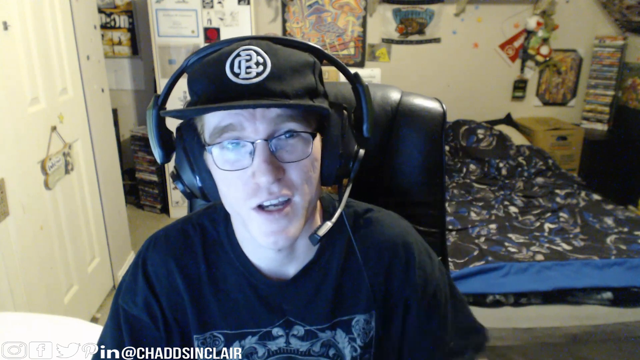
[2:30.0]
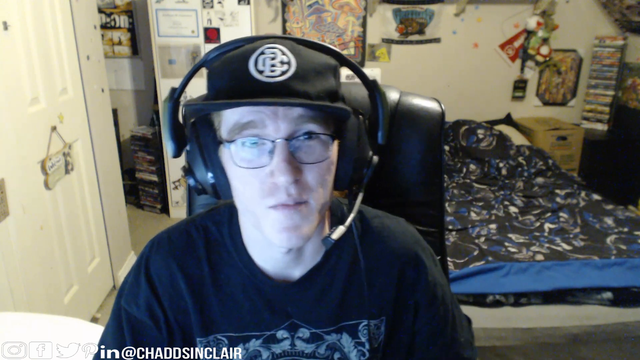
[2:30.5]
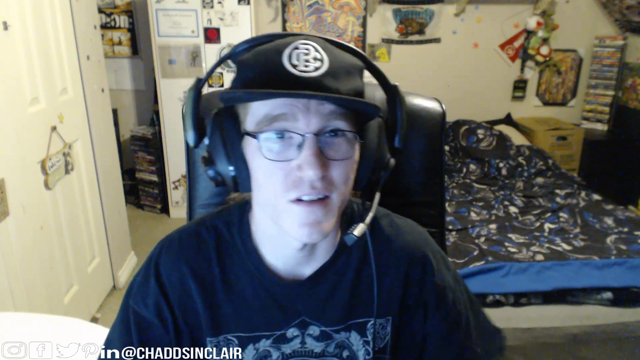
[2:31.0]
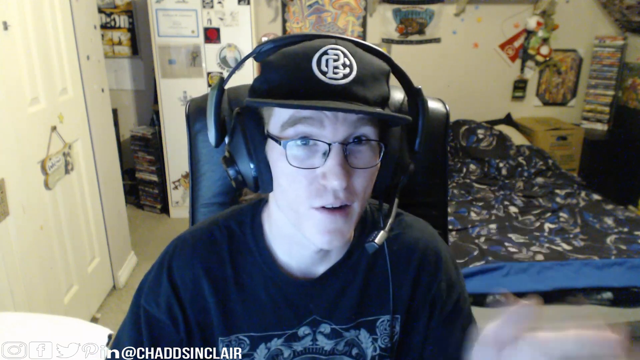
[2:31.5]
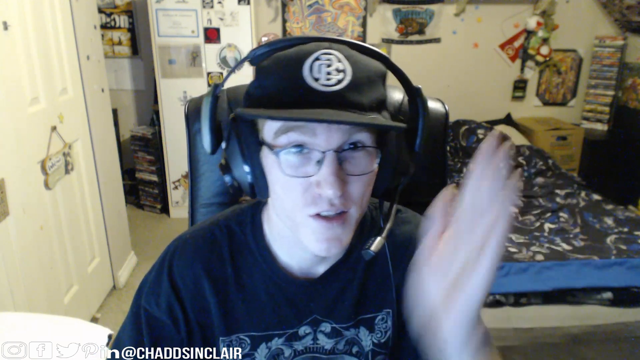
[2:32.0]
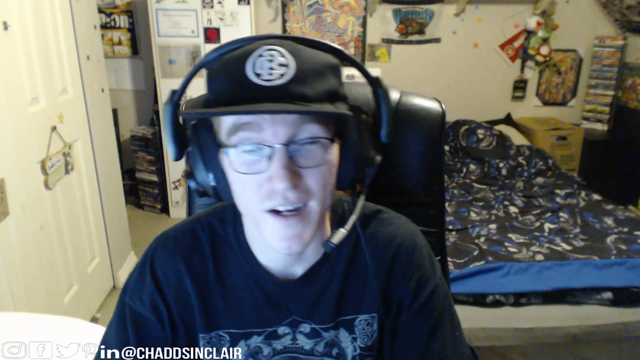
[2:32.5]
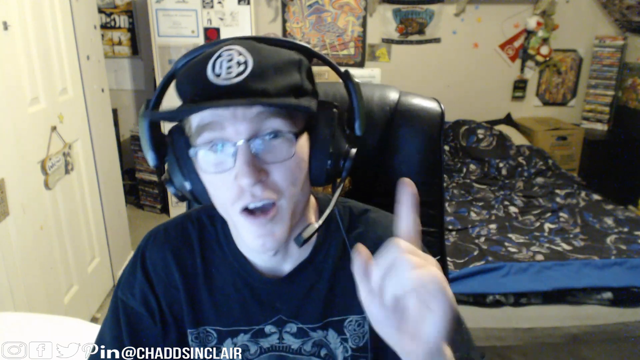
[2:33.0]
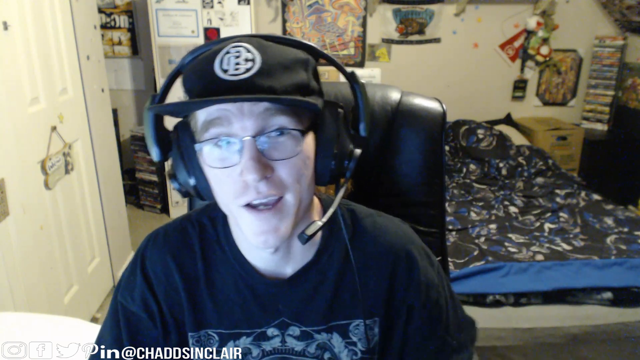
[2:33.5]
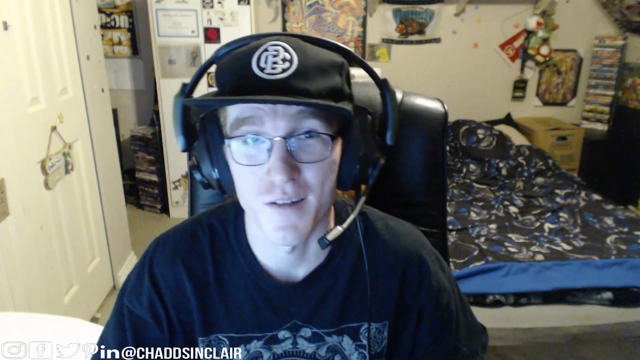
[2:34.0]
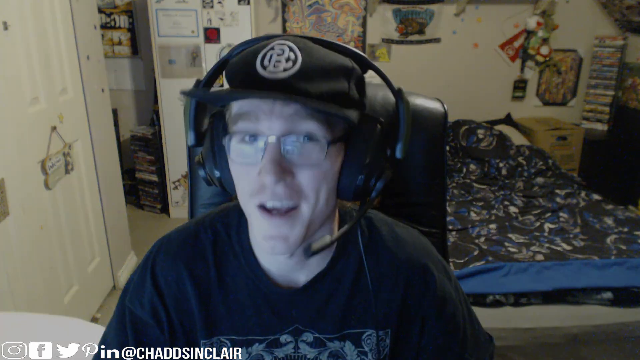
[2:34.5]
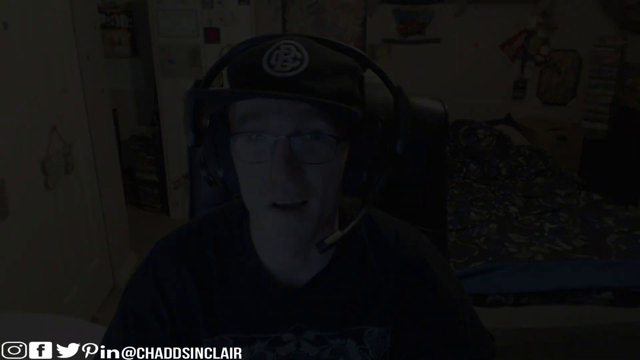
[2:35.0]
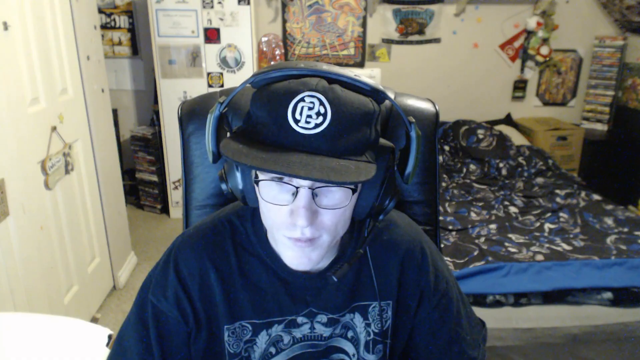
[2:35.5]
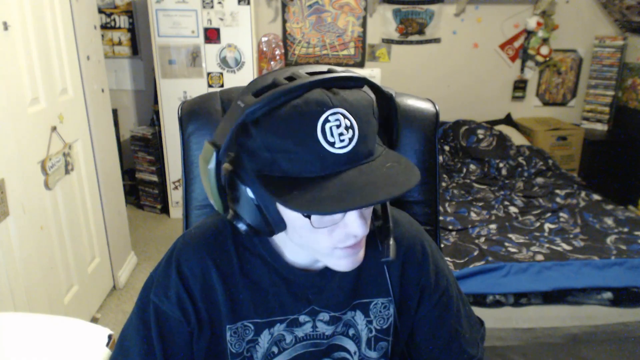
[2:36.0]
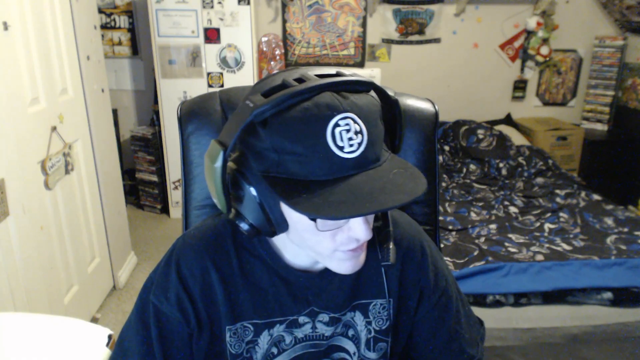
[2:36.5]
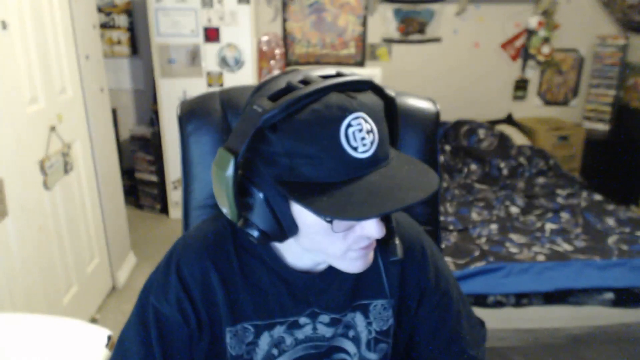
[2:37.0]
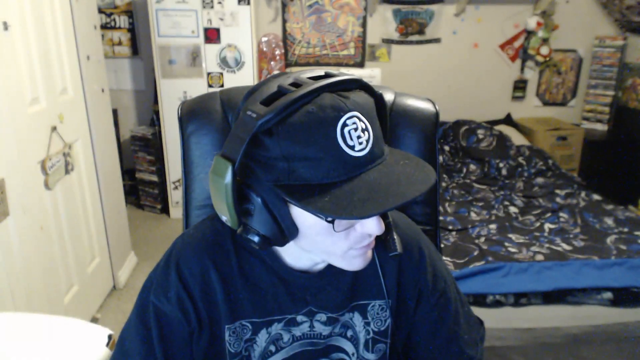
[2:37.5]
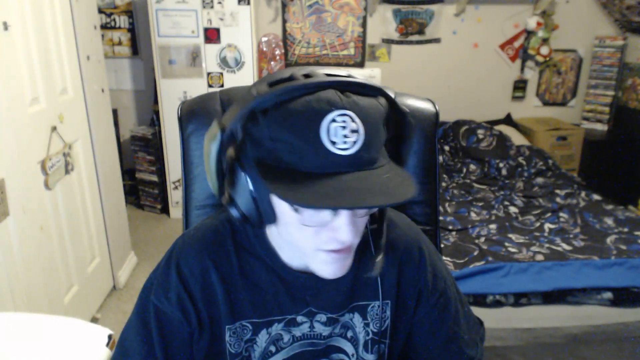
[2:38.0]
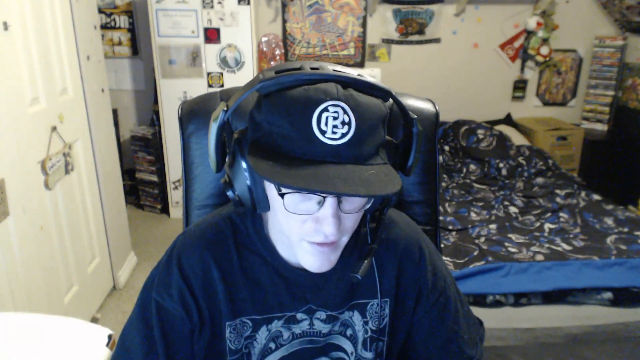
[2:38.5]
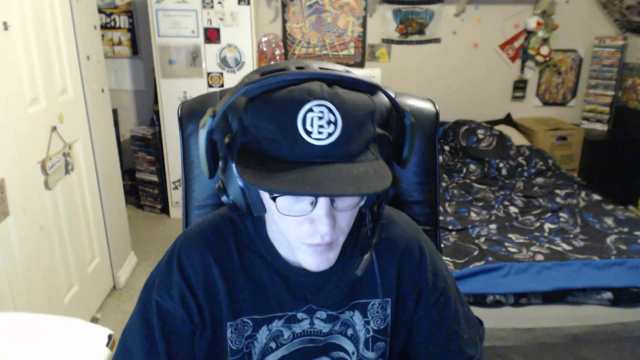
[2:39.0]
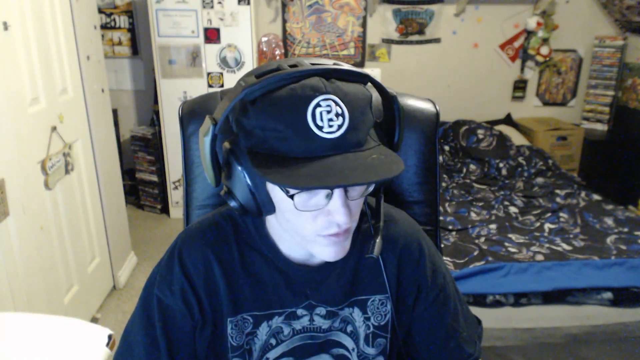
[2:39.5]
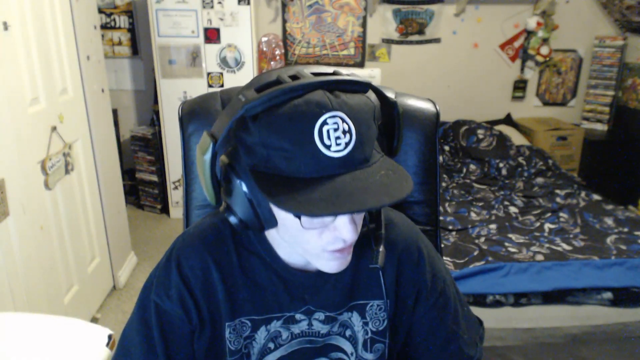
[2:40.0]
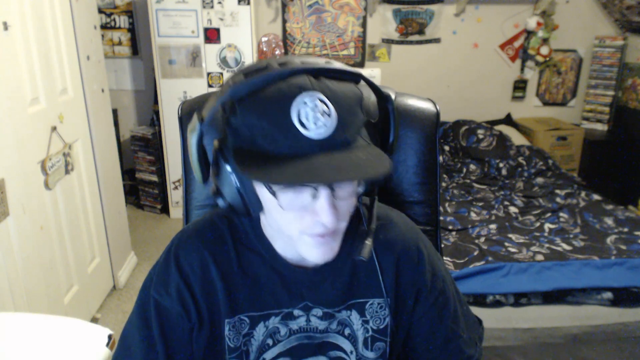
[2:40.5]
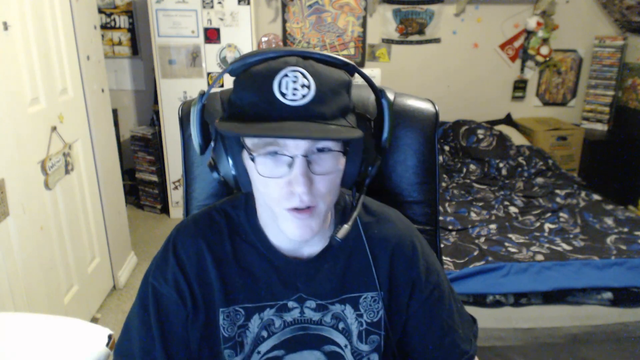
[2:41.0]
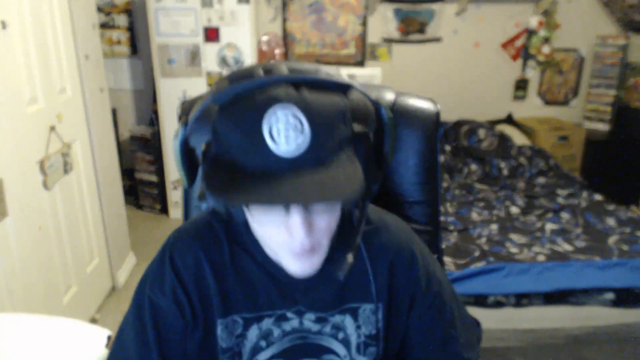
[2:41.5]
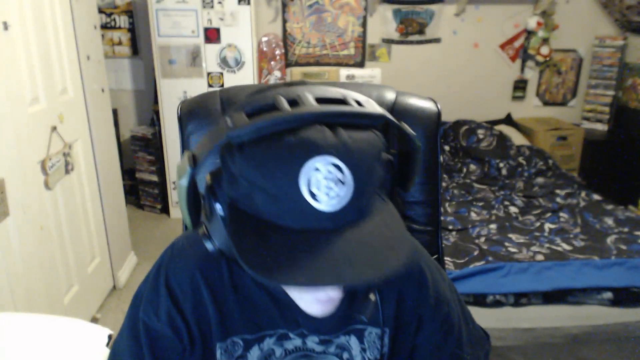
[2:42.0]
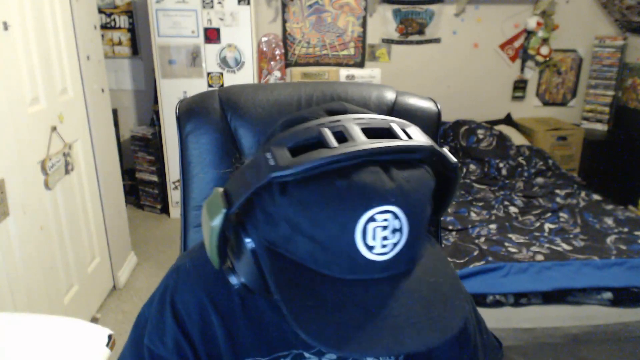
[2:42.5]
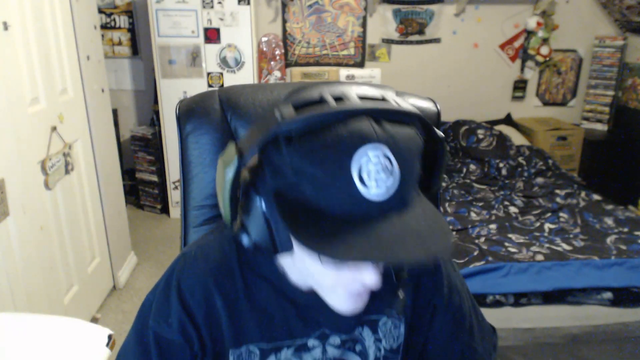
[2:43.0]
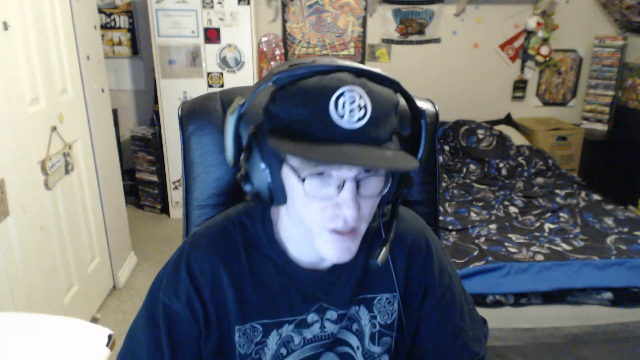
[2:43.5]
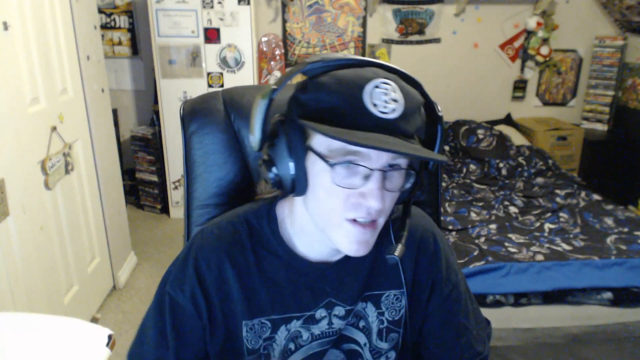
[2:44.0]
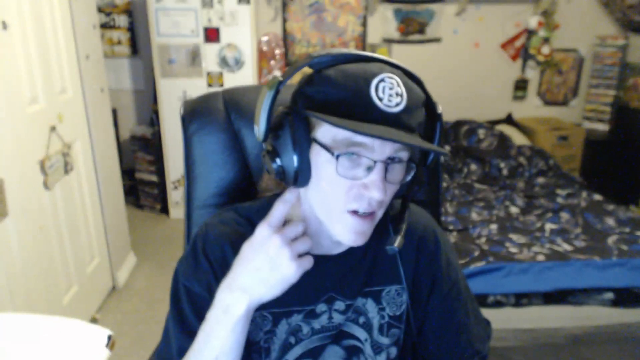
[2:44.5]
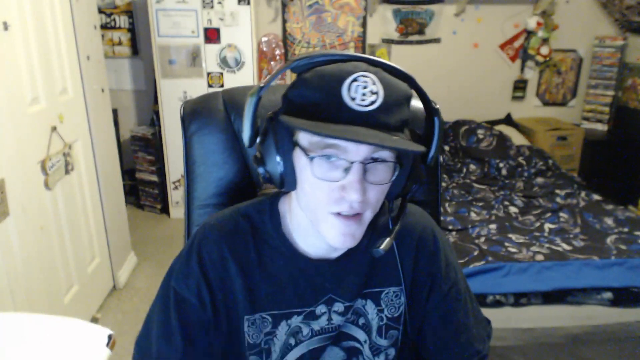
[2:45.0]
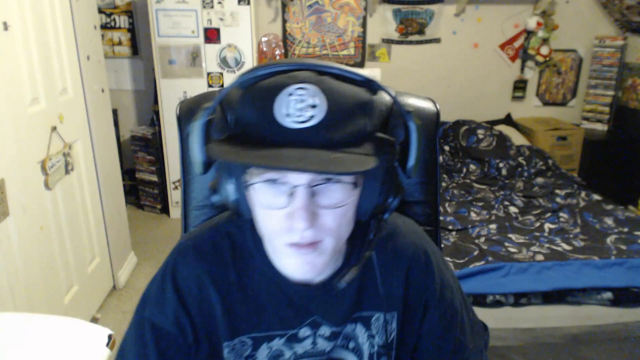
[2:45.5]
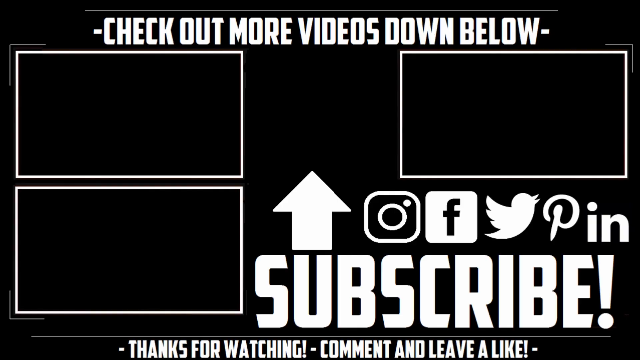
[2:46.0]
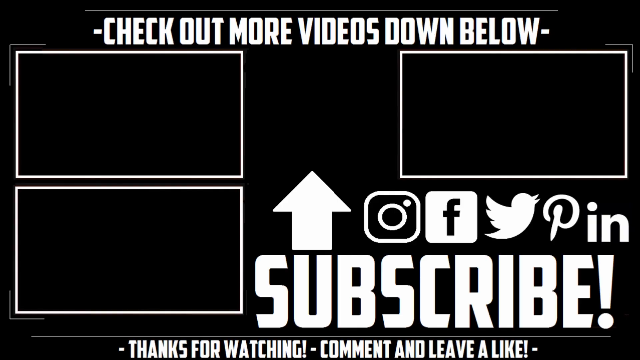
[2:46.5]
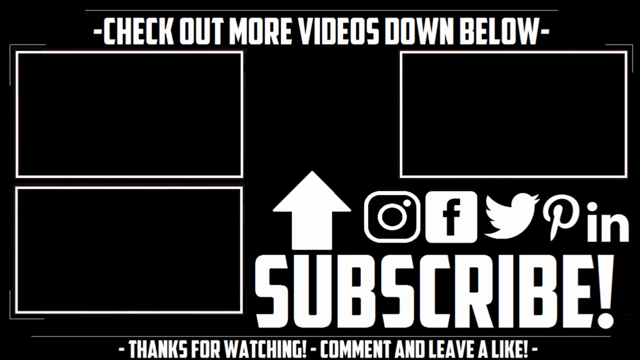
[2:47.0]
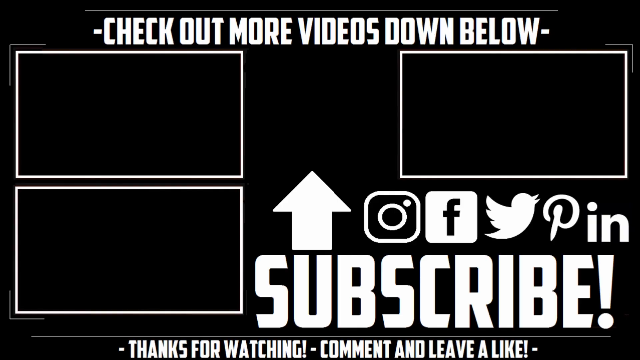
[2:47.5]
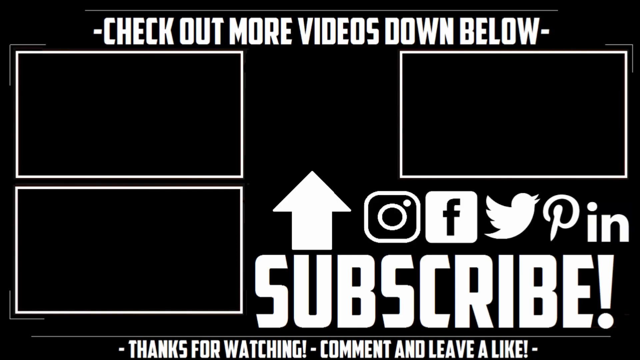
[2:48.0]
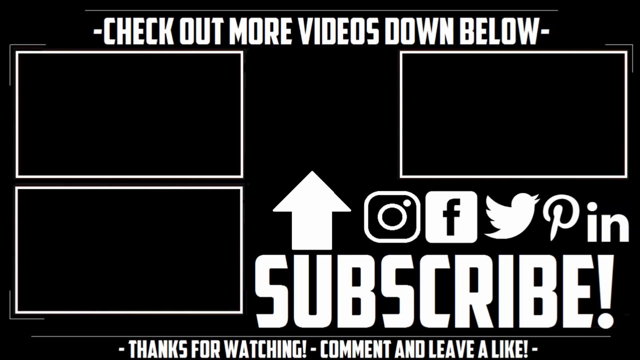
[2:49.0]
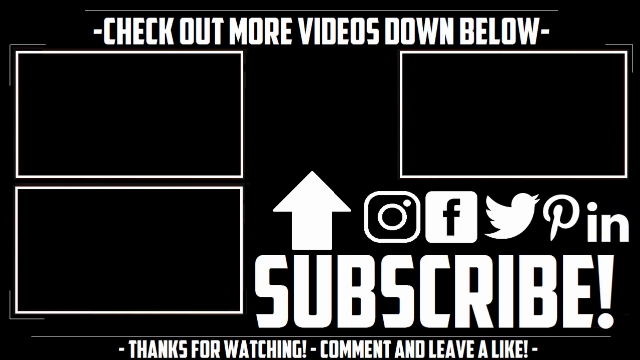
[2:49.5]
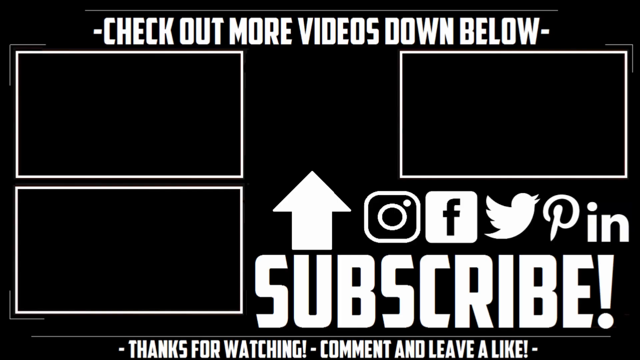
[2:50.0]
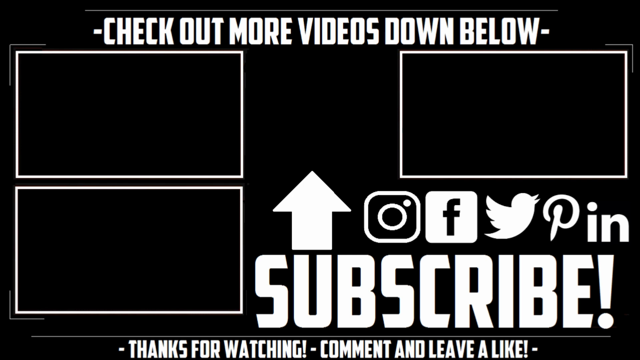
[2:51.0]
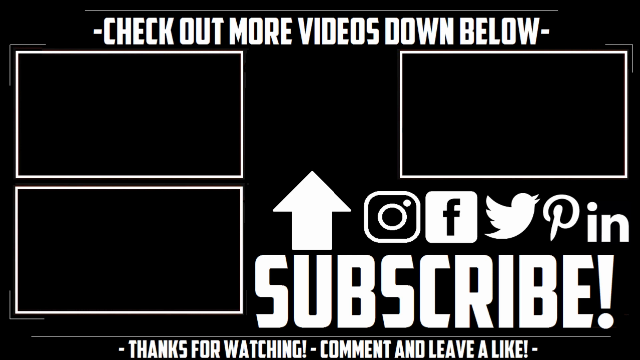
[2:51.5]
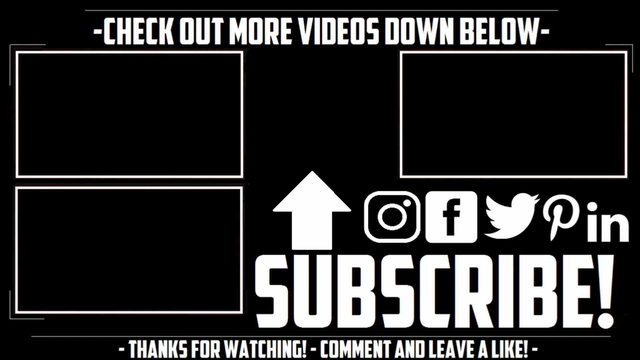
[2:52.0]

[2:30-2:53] The man talks, wearing a black headset with big ear pieces, a black hat that looks like it says "CBC" or "CB" in white, and a short-sleeved black shirt. Posters and other things are on the wall behind him, and a comforter is mostly black with blue and white on it. He gestures with his left hand, which appears on the right side from the camera's view. His glasses have a glare from the computer monitor. He then looks down, and the mouse keeps moving. Then the background turns white with "- check out more videos down below -" in white. In the bottom right corner, big bold letters read "subscribe!" with an arrow pointing up, and to its right are the Instagram, Facebook, Twitter, Pinterest and LinkedIn logos. "thanks for watching" appears, and "comment and leave a like" is at the very bottom.